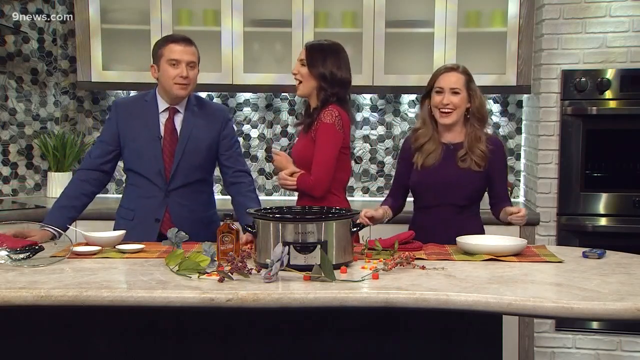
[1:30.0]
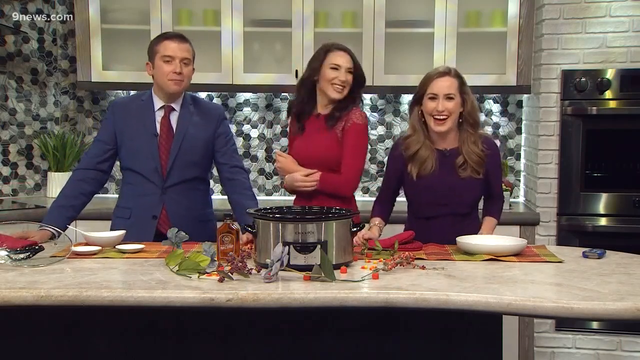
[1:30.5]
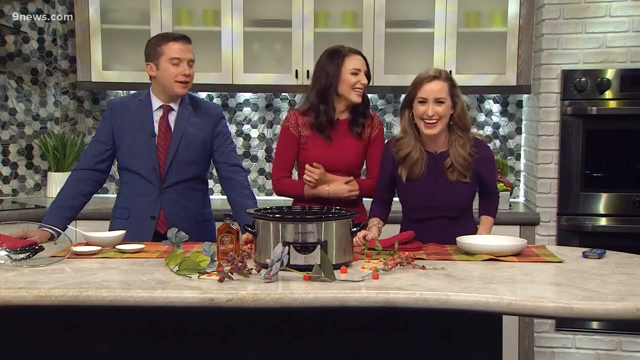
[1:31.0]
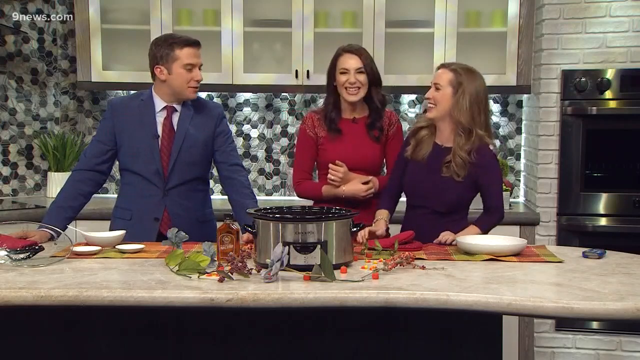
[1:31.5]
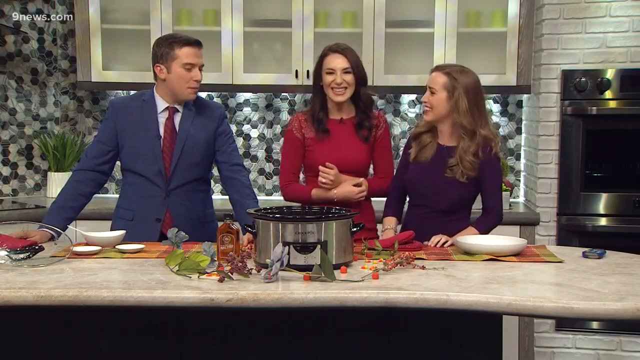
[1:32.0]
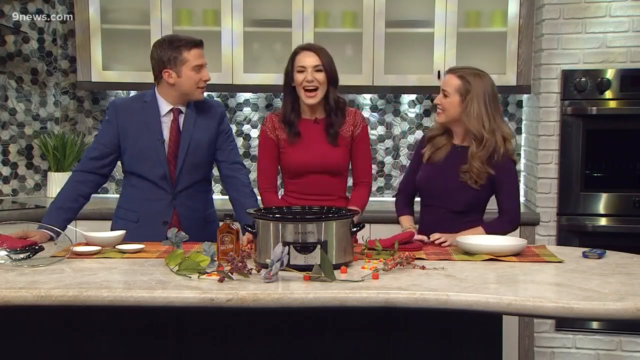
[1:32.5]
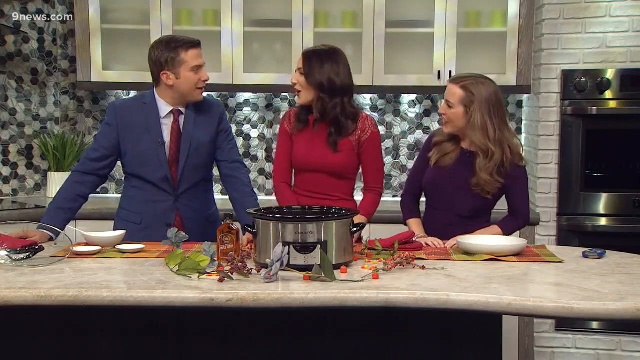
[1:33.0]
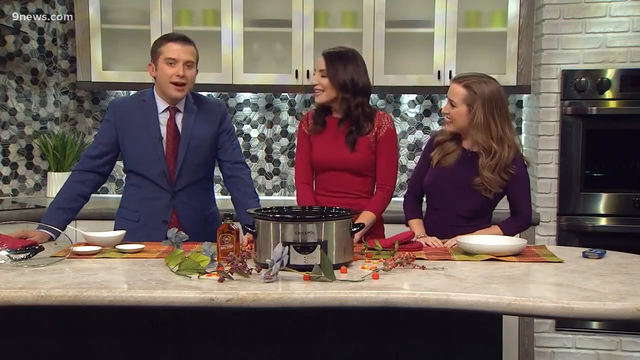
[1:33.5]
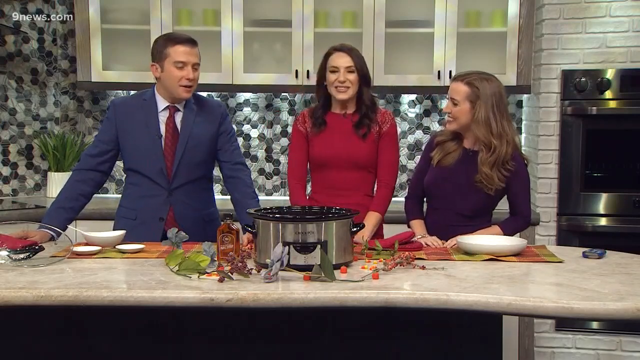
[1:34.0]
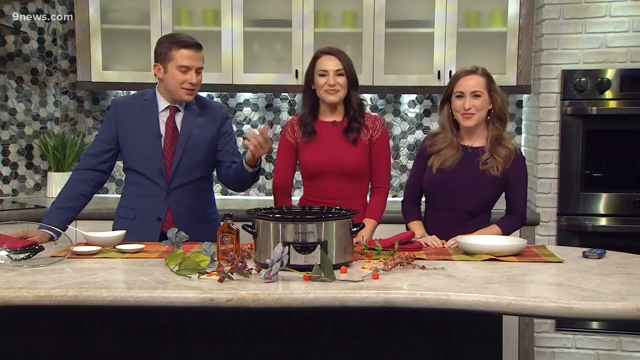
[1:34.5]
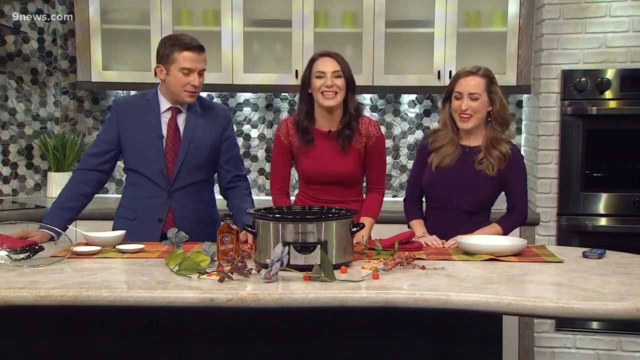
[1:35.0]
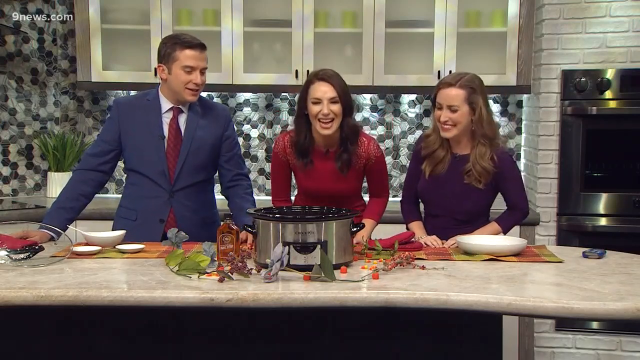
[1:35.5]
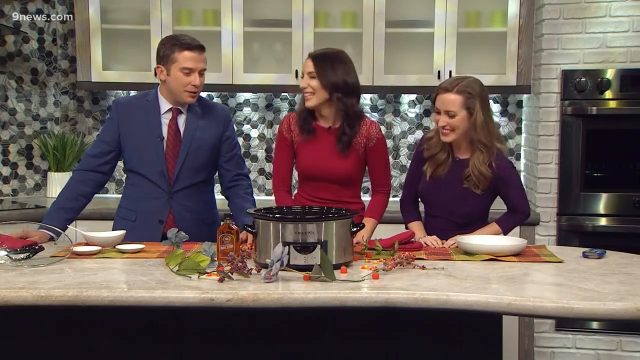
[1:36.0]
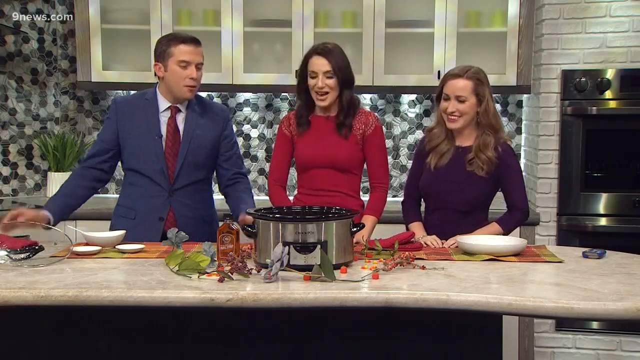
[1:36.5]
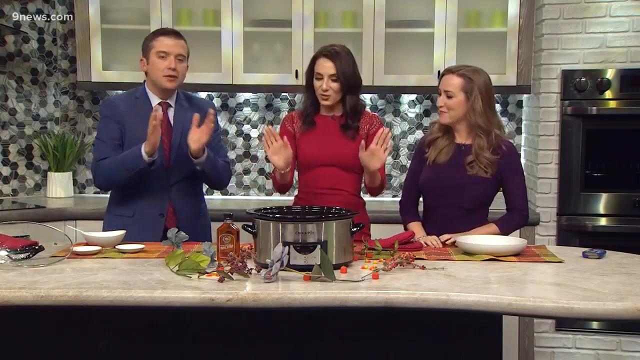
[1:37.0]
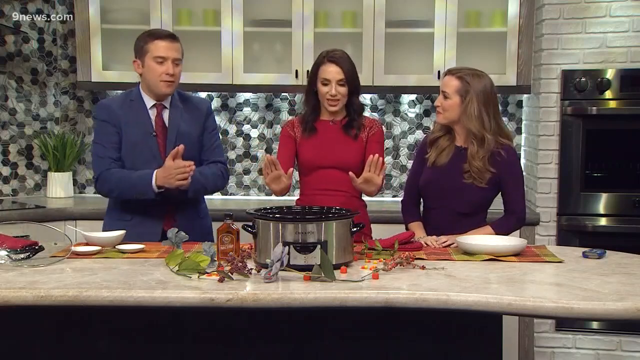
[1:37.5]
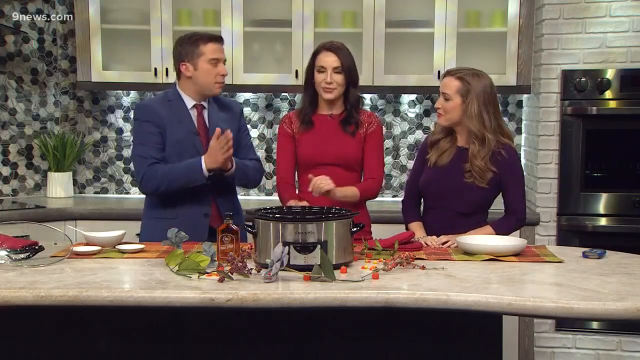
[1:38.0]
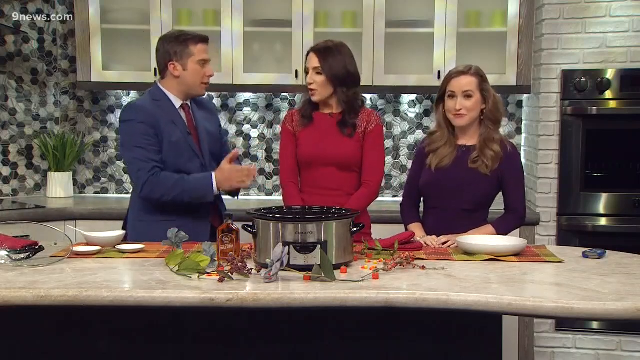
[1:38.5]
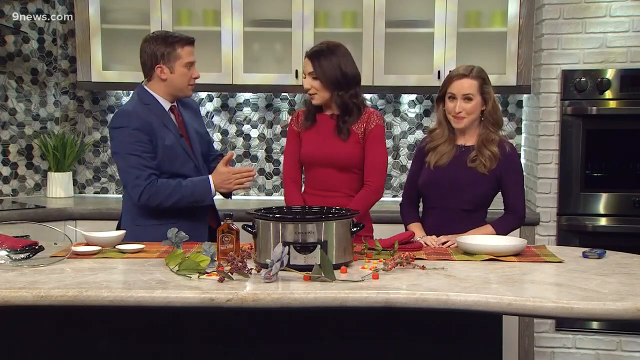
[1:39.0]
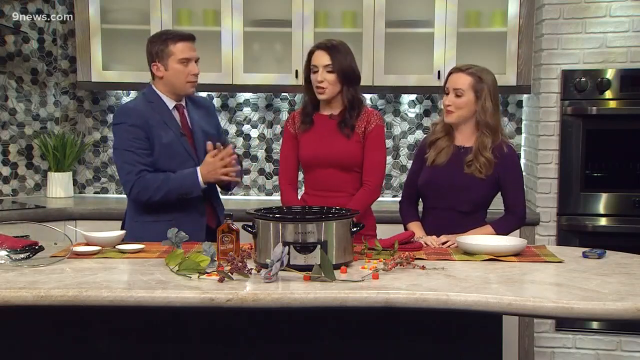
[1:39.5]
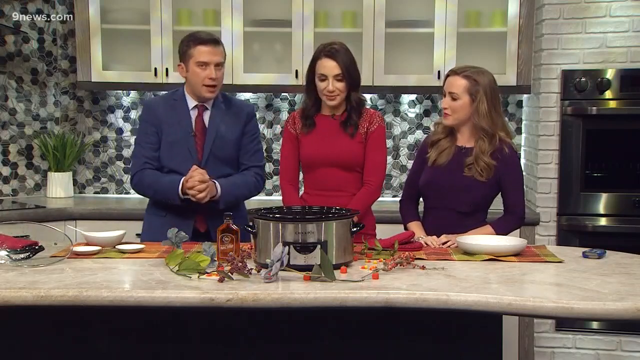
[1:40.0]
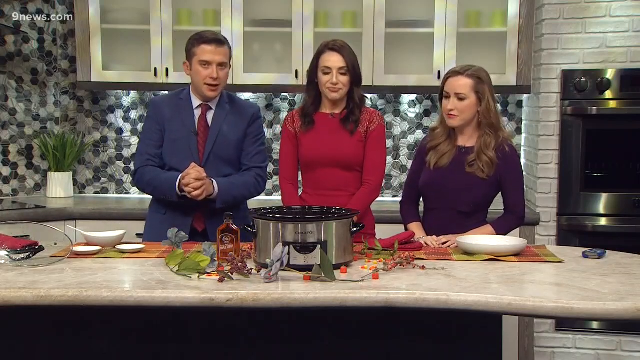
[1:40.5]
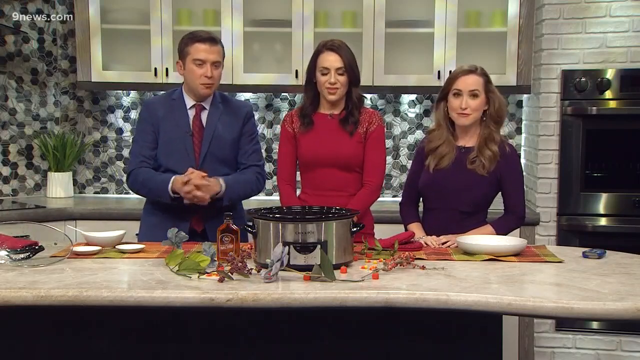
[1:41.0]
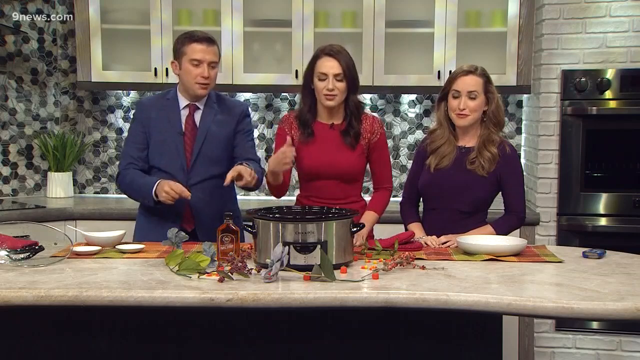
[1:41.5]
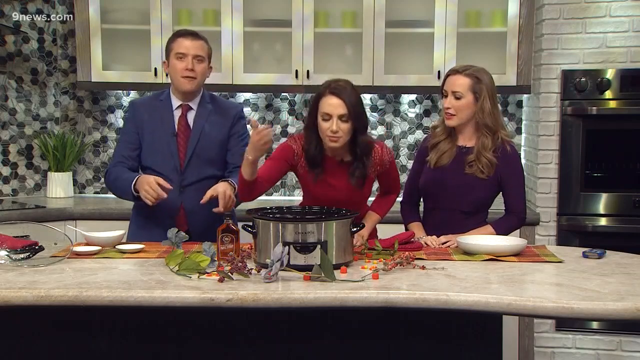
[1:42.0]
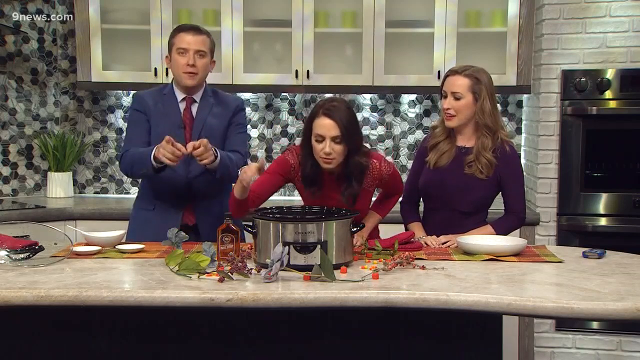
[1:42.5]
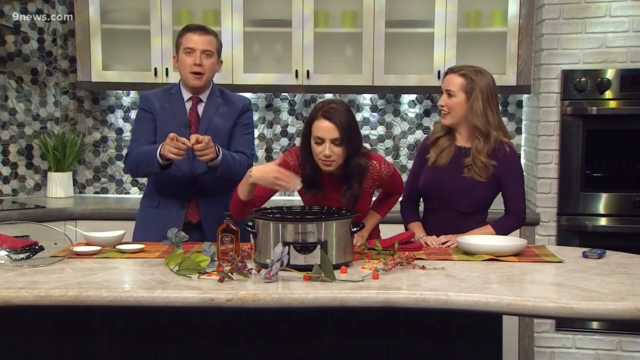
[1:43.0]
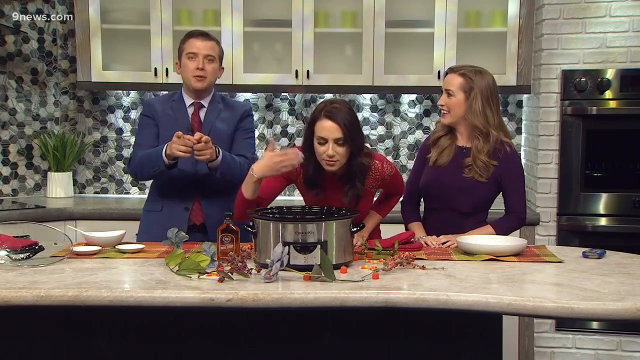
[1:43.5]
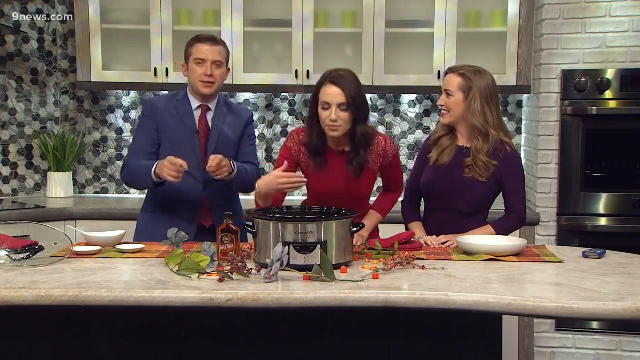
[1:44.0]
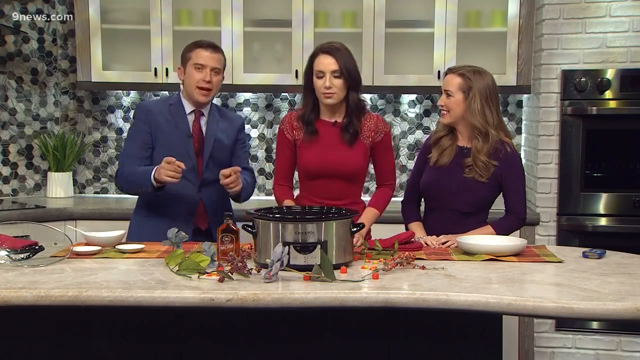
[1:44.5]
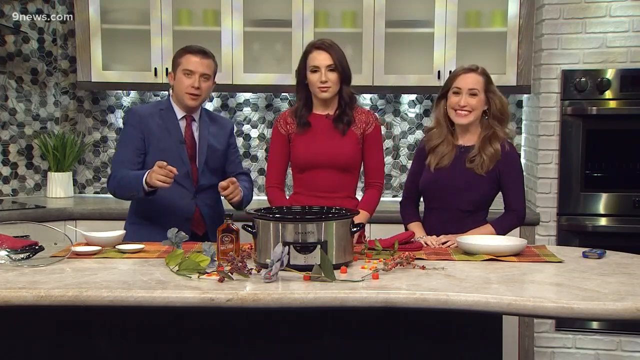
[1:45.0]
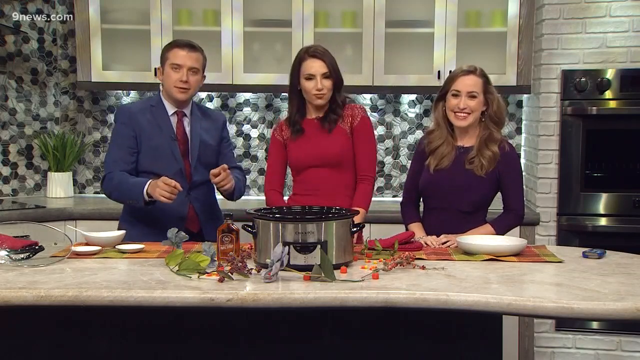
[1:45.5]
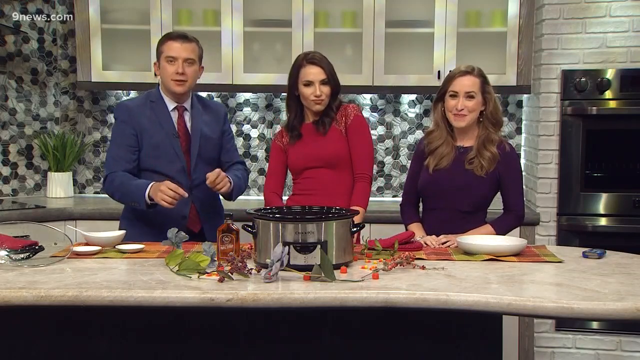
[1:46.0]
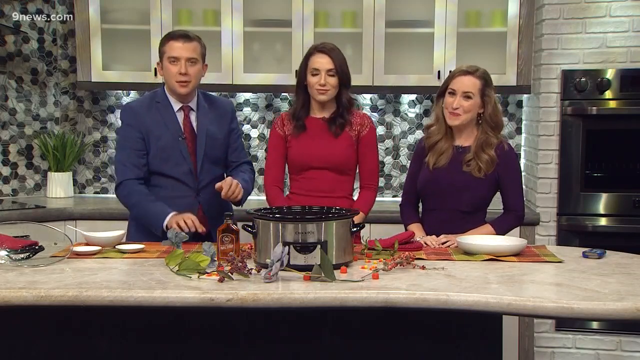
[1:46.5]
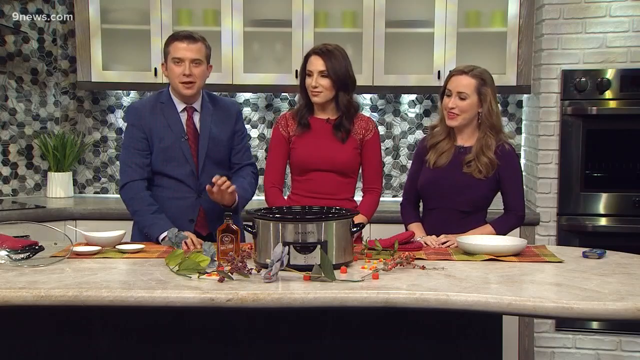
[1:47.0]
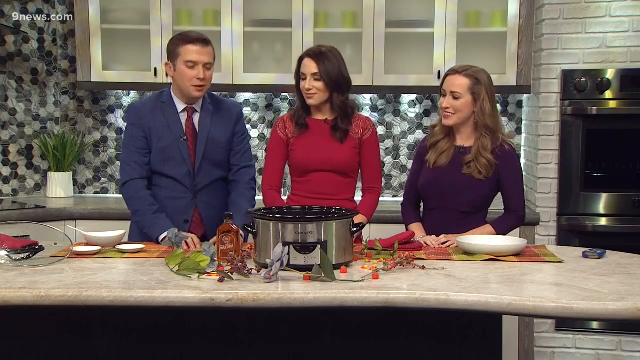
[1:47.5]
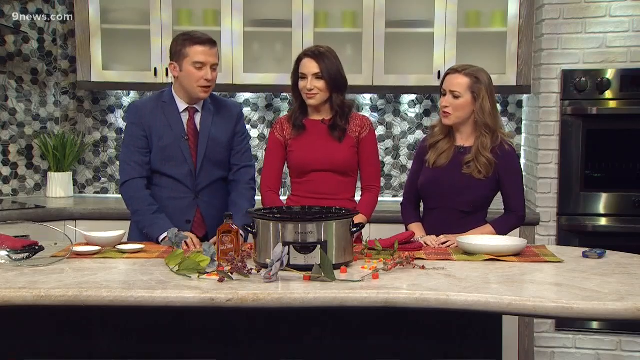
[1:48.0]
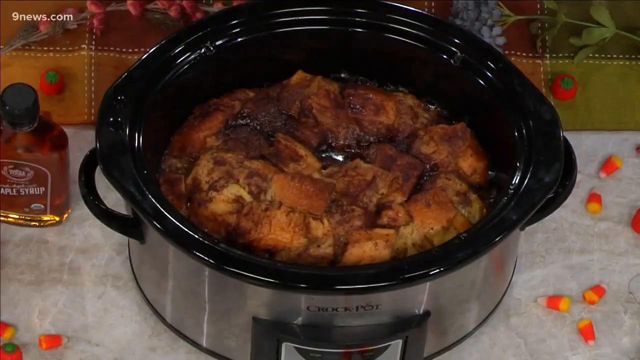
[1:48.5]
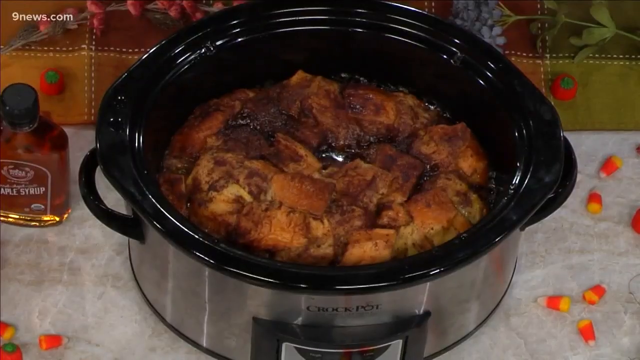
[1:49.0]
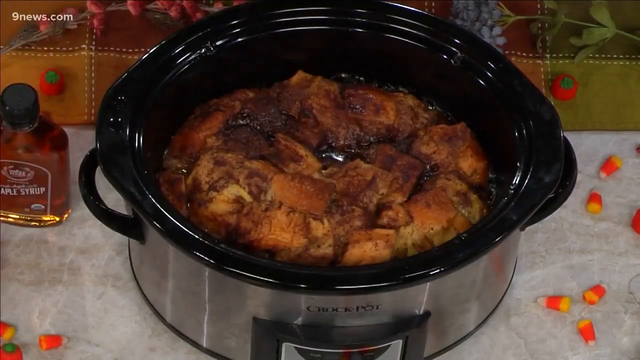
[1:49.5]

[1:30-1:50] The three people behind the counter talk, laugh and face each other, and seem to agree: the lady in the middle nods and the one on the far right smiles as the man talks. They use their hands to express what they are saying, and their hands are also placed on the counter. To the far right of the lady in the purple dress is a stove, apparently an oven, built into a wall with a cream, brick-like-looking surface. On the other right side, the background is grey-white and black and tile-like, with cupboards on top that have transparent glass in the middle. The lady uses her hand to waft the smell from the pot to smell it.